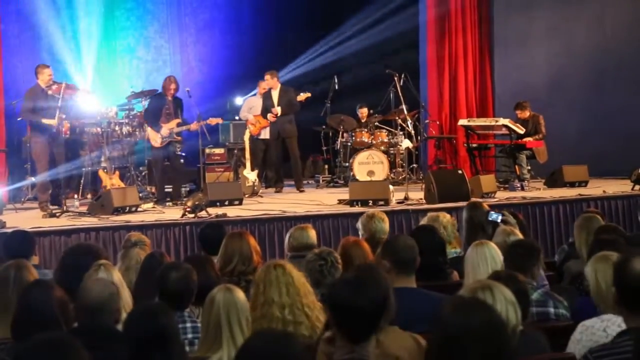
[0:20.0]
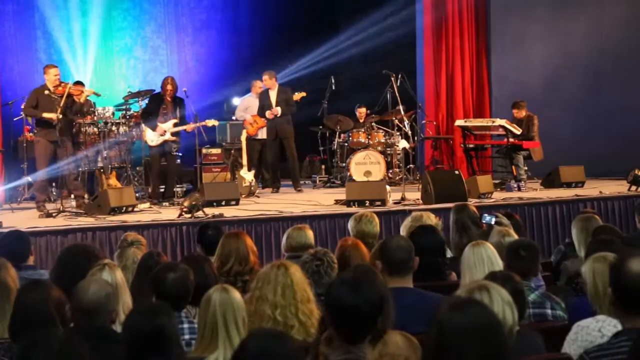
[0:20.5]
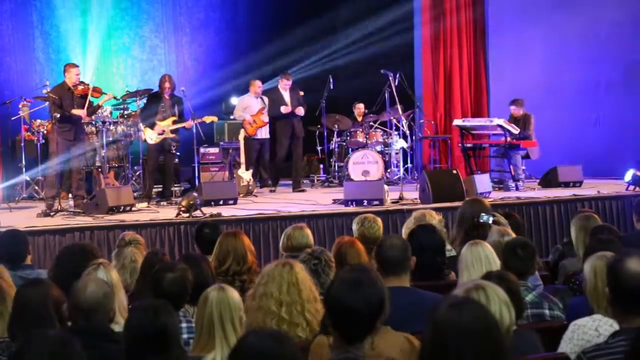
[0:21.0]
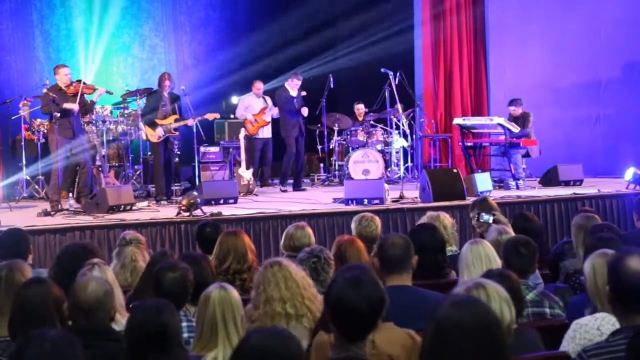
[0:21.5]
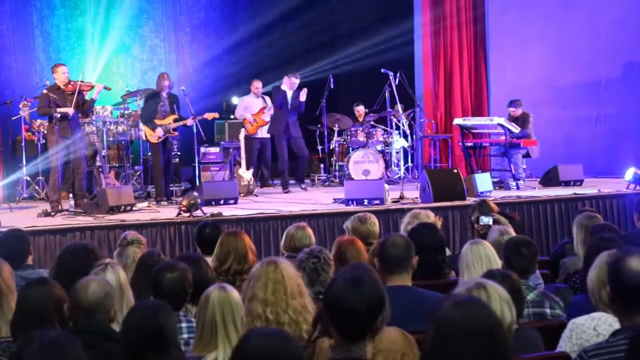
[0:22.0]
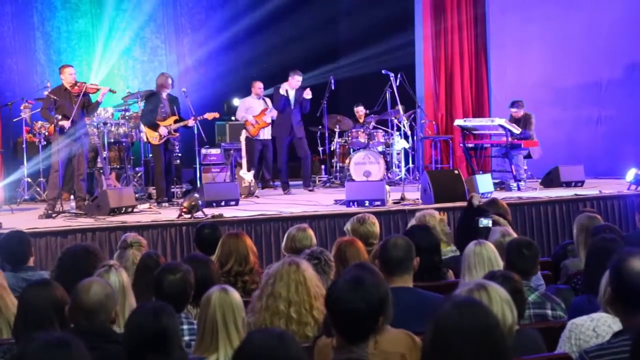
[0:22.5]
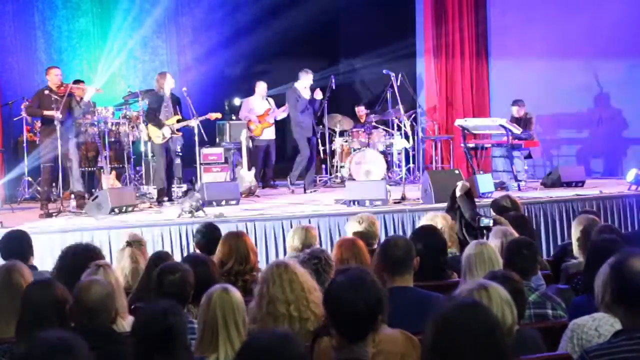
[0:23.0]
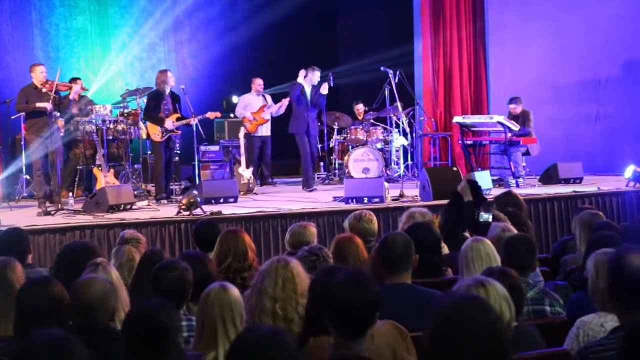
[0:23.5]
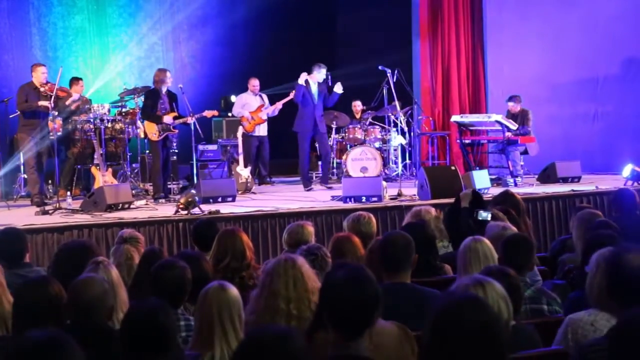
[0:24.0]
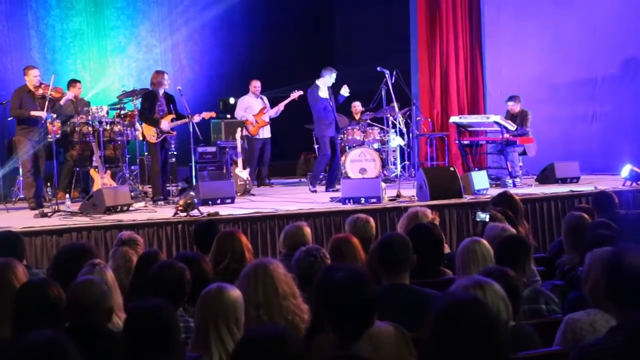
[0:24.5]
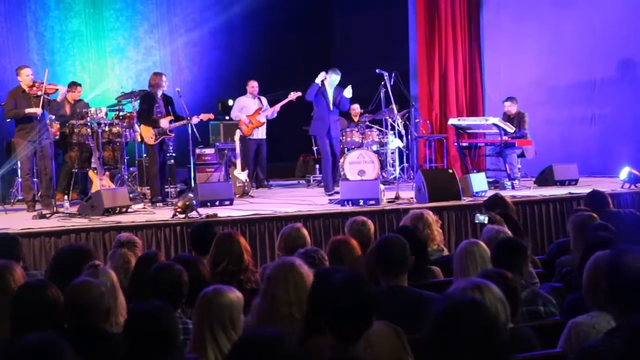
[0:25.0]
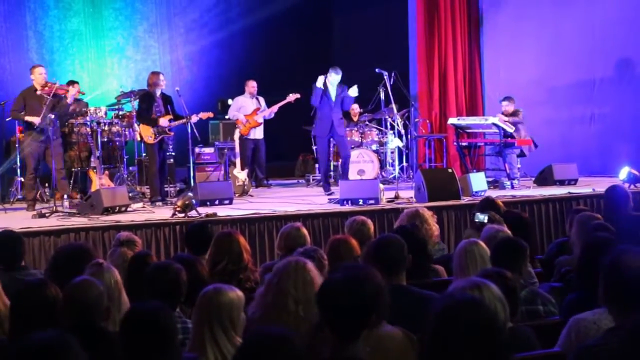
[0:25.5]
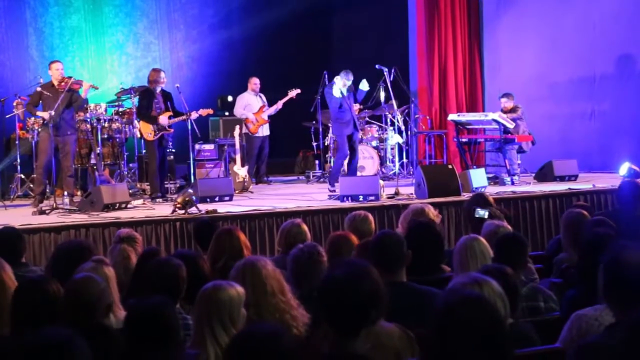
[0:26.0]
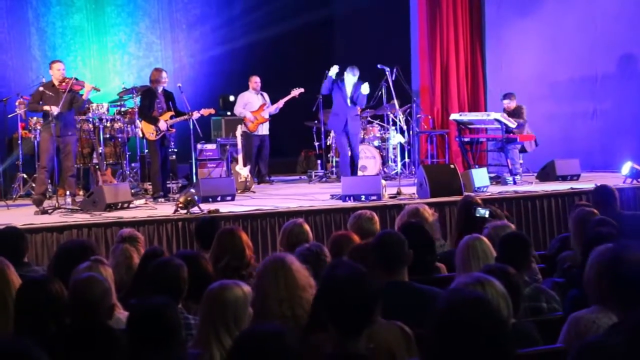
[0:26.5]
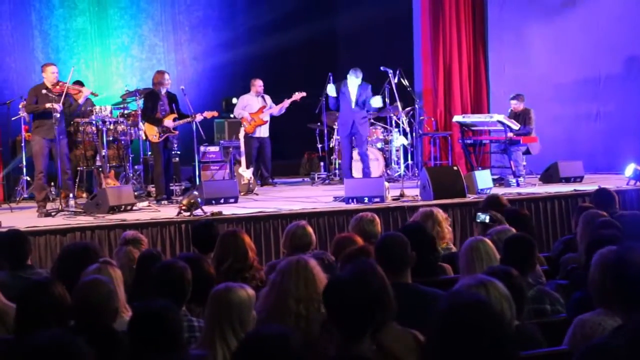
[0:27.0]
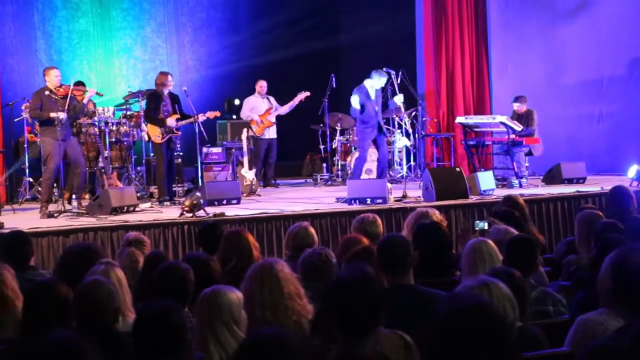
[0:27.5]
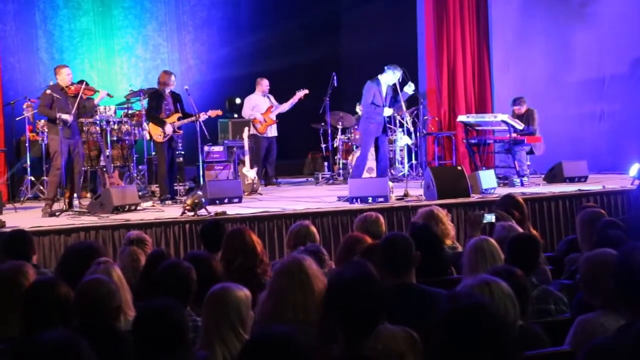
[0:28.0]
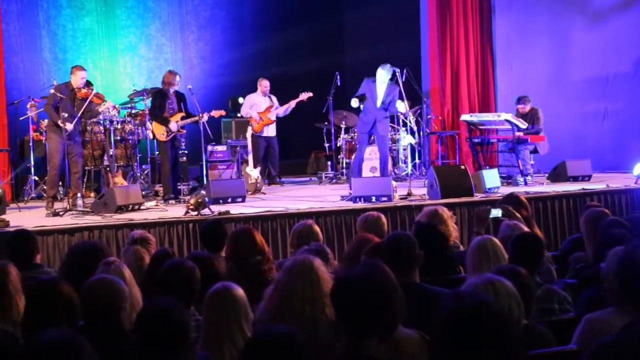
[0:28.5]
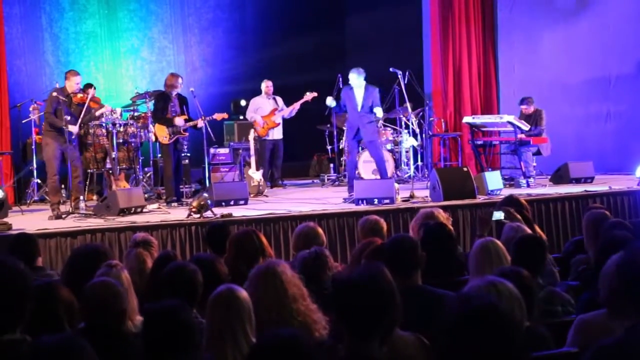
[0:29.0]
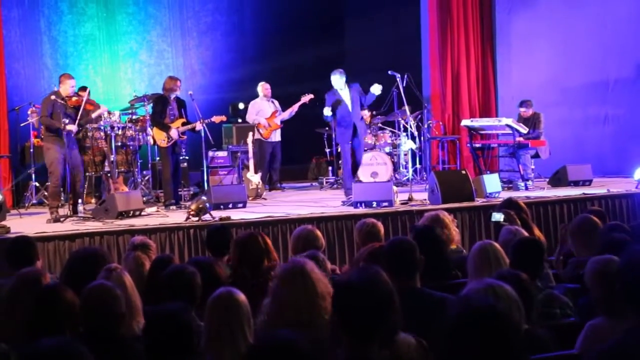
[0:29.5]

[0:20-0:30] The lead singer claps his hands a few times while stomping his foot to the beat of the music. Everybody on stage is playing their instruments. The keyboardist, who has dual keyboards, is on the far right side of the stage, and the violinist is on the far left side. The drummer is in the back center, as are the bassist and the electric guitarist. Another drummer is at the back corner, kind of covered, behind or close to the stage curtains. The lead singer is kind of grooving to the music, moving his shoulders around and looking back at his bandmates. The crowd looks to be in their mid-30s and up; none of their faces are visible, only the backs of their heads. It looks like a casual, semi-formal event. No one is holding up cameras or mobile phones except for one person, who holds up what looks like a digital camera.